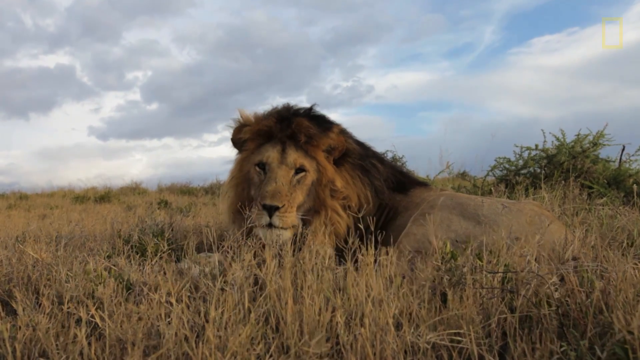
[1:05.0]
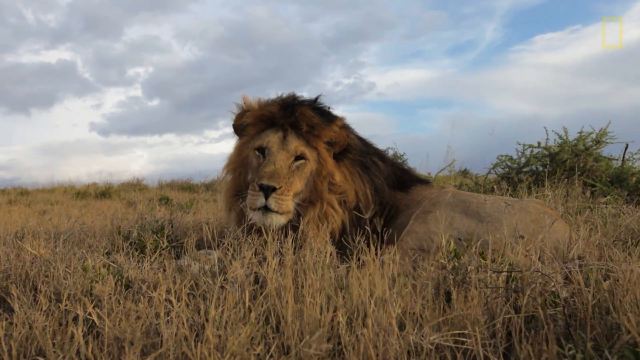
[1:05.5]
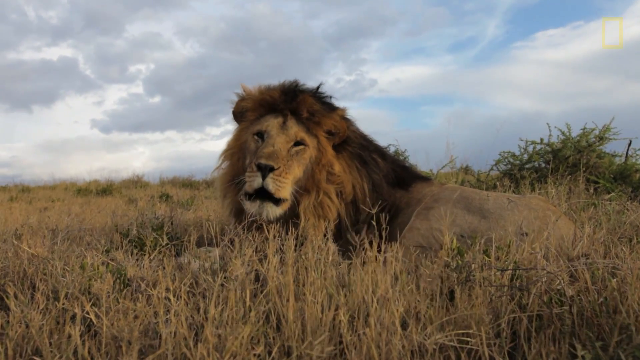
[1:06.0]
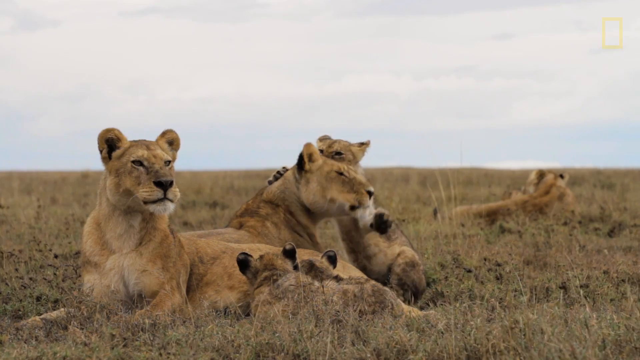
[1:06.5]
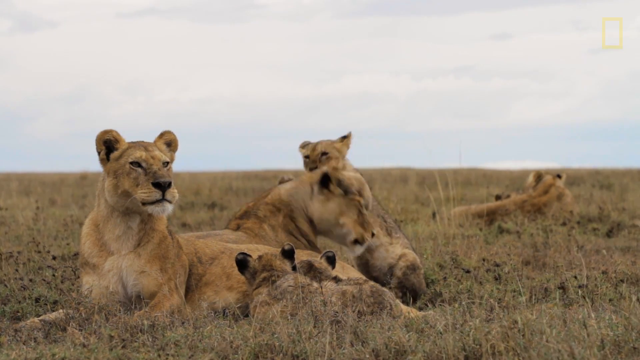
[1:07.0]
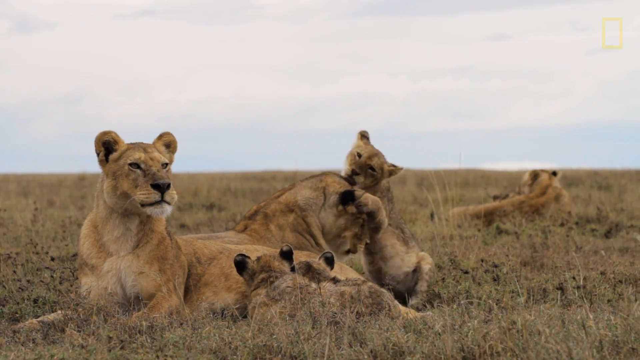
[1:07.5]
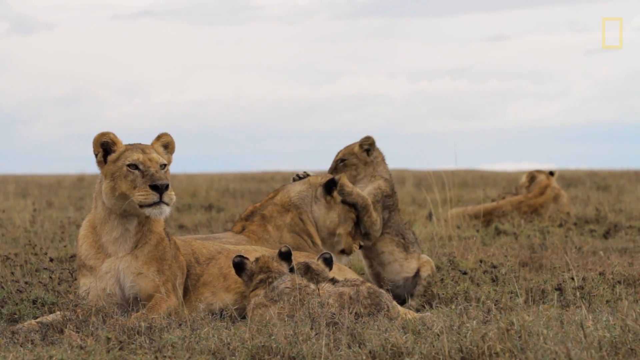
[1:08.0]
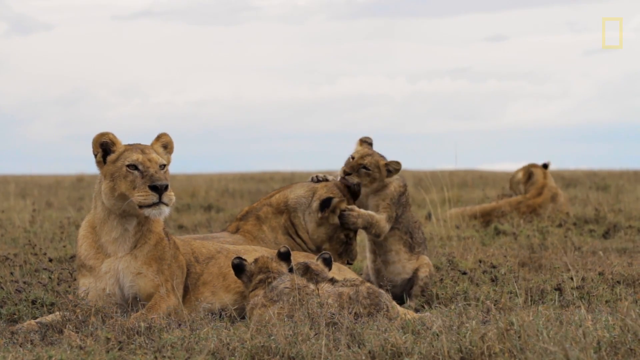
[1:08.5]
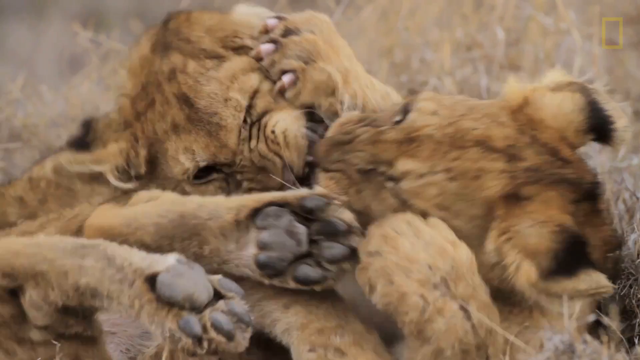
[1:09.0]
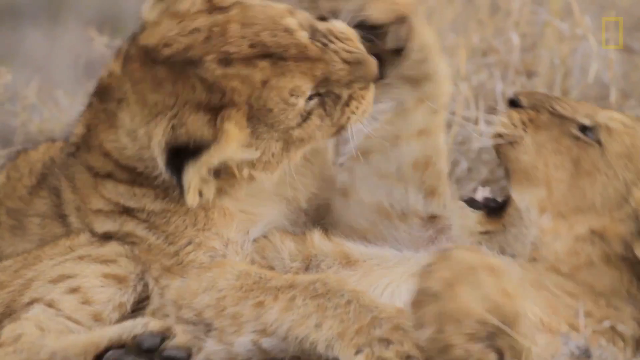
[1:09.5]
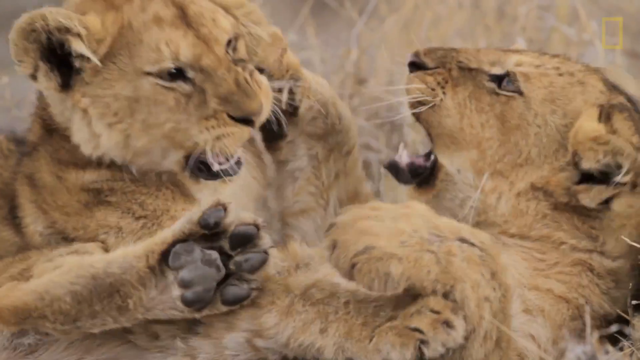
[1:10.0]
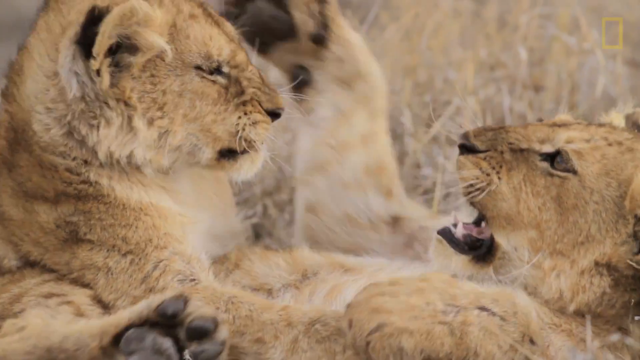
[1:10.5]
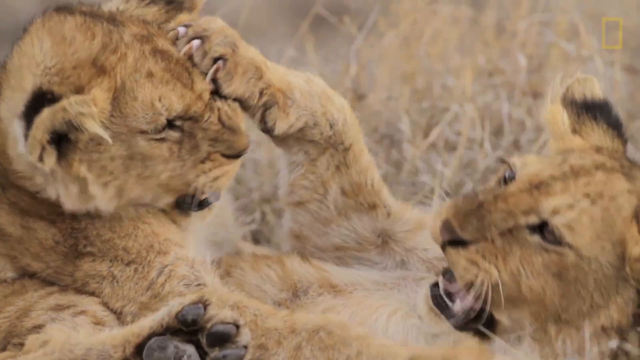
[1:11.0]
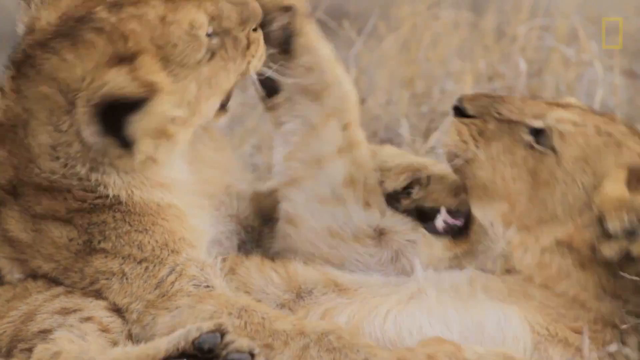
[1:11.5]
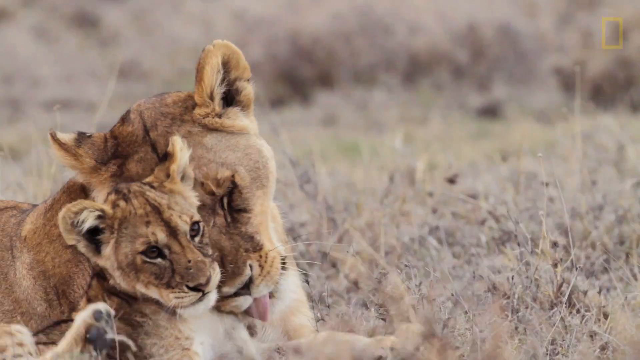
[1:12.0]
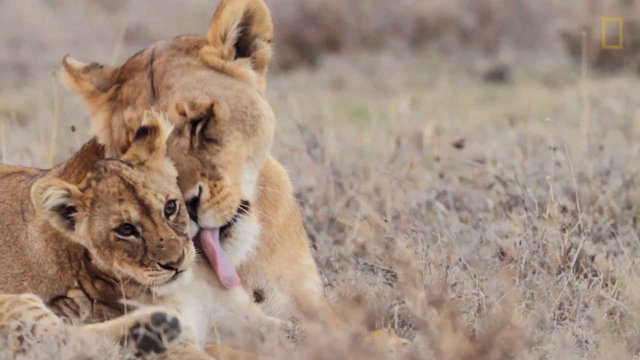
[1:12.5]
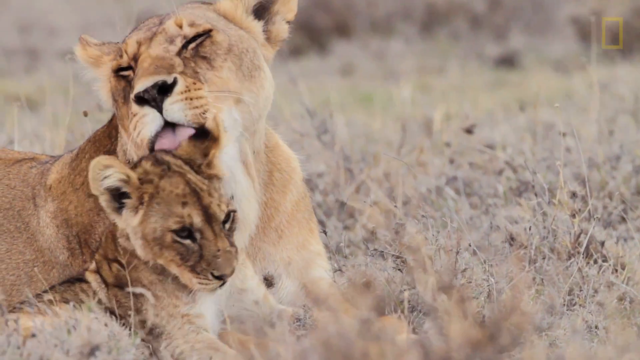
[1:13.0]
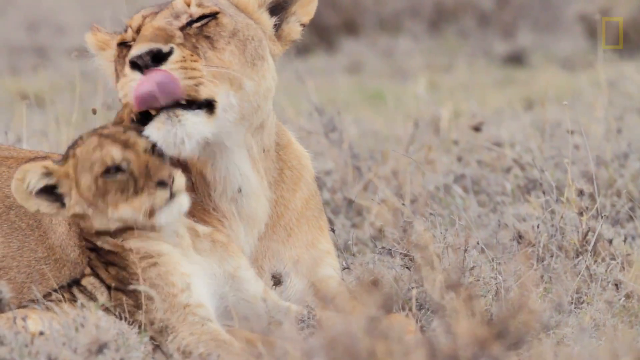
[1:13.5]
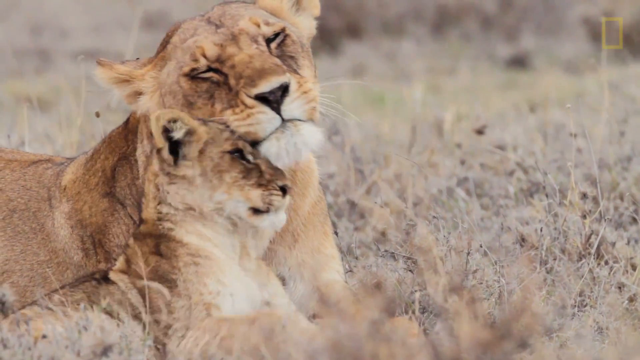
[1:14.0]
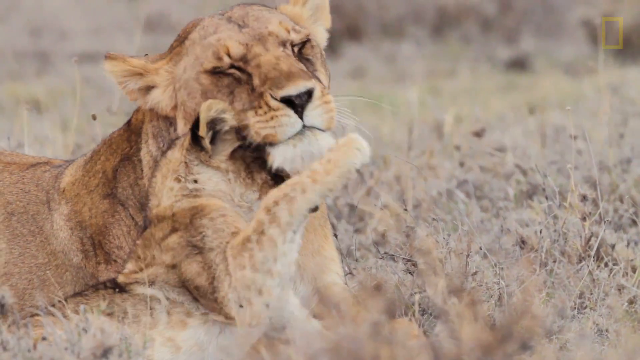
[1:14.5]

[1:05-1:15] A male lion lays in the grass in the savannah, opening his mouth and looking very relaxed, possibly yawning. The view switches to a lioness laying in the grass with four cubs playing around her; another lioness is behind her. Next, two cubs play, pawing at each other's faces and showing each other their teeth, clearly in play and not aggression. Then a lioness licks a cub on the side of the face, and the cub nuzzles up to its mother with its head and paws.